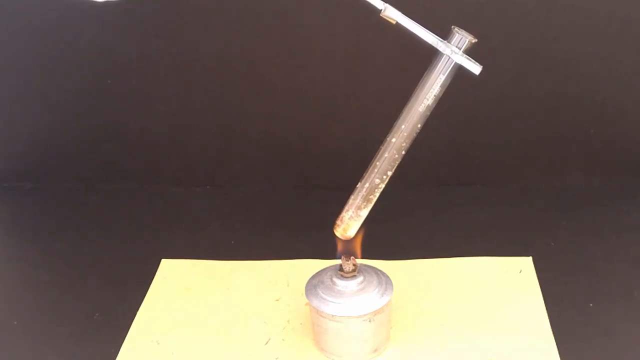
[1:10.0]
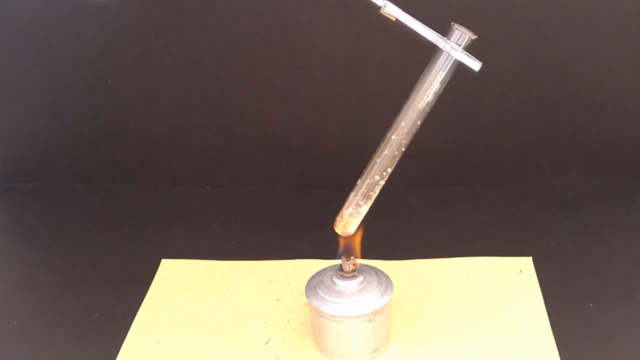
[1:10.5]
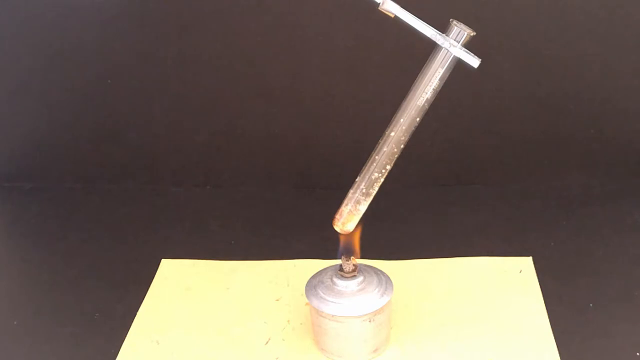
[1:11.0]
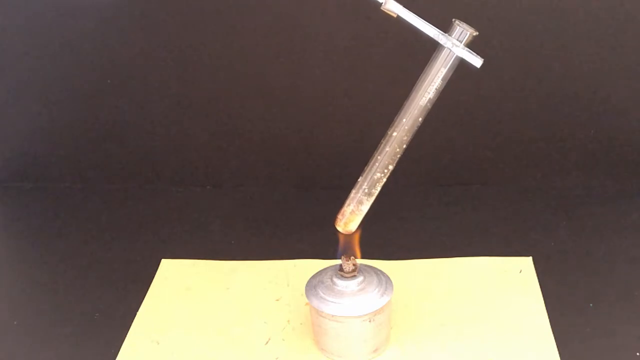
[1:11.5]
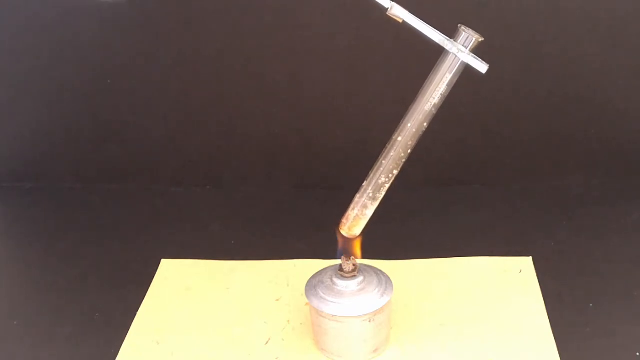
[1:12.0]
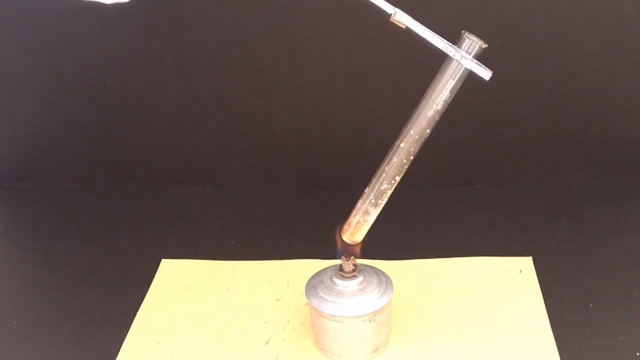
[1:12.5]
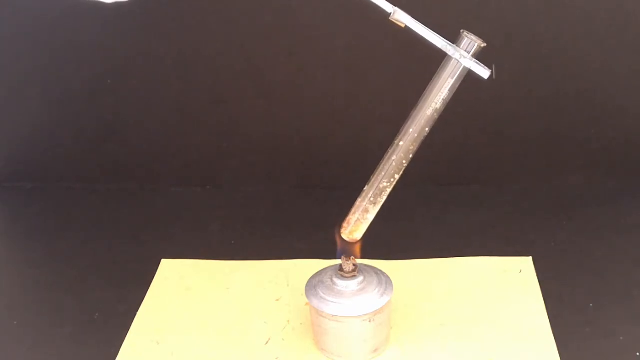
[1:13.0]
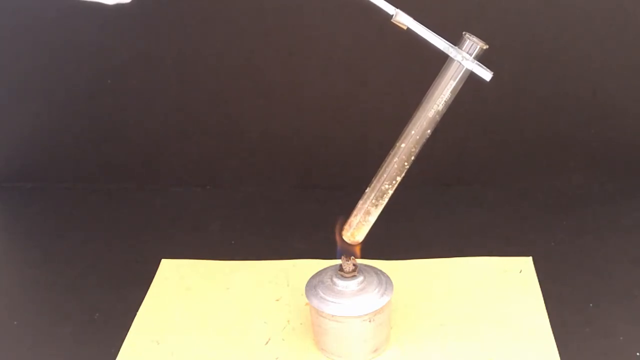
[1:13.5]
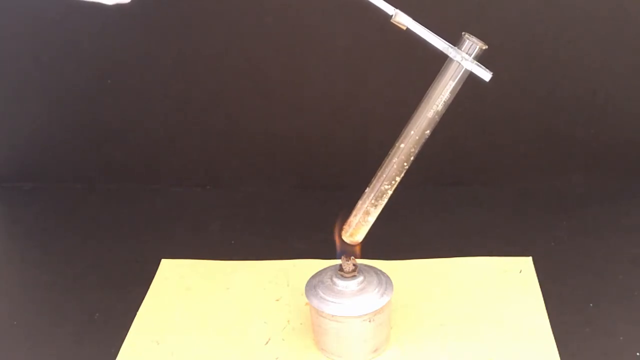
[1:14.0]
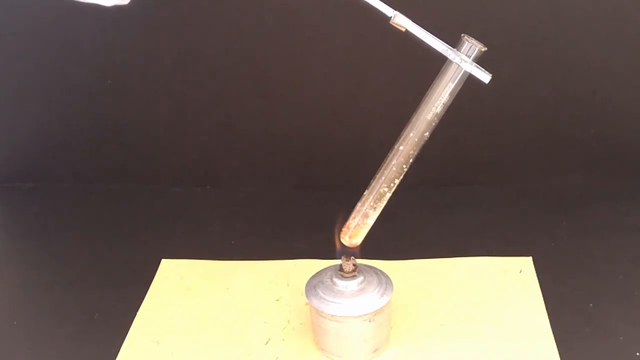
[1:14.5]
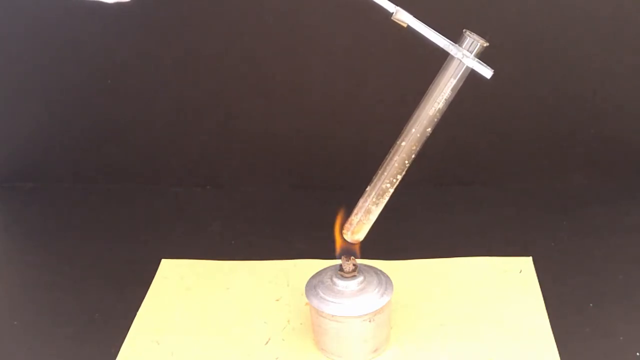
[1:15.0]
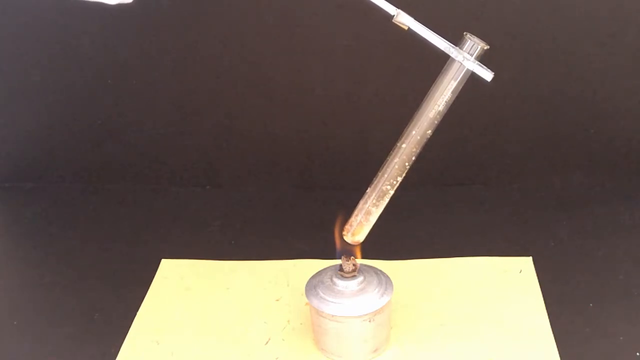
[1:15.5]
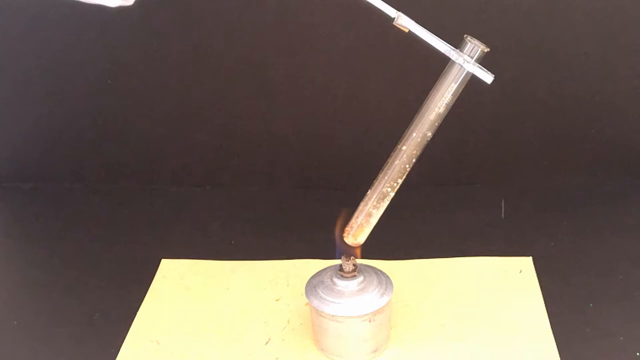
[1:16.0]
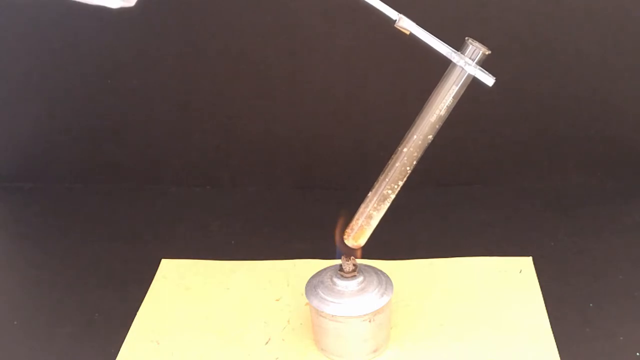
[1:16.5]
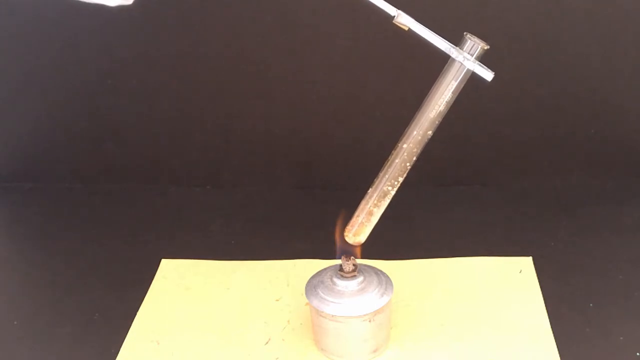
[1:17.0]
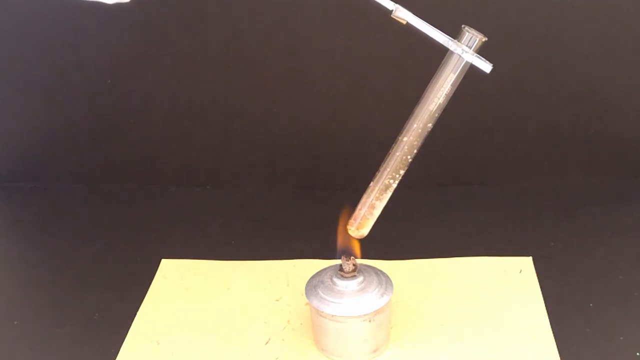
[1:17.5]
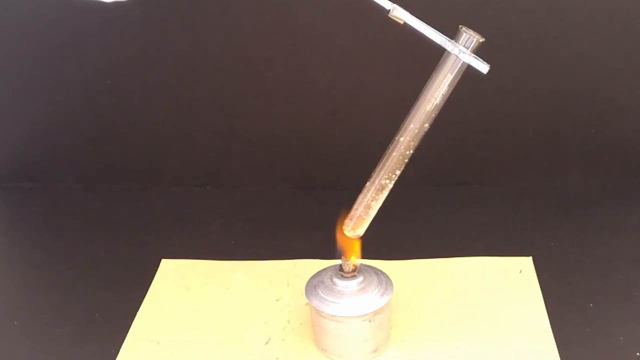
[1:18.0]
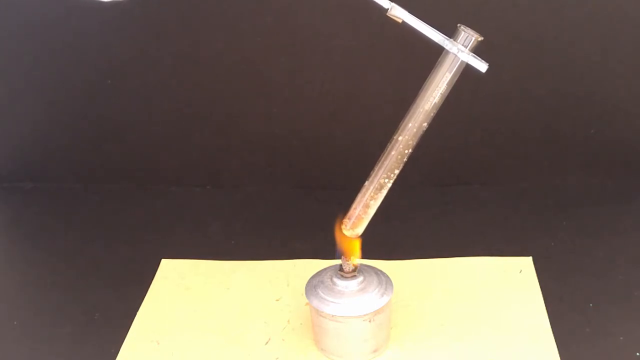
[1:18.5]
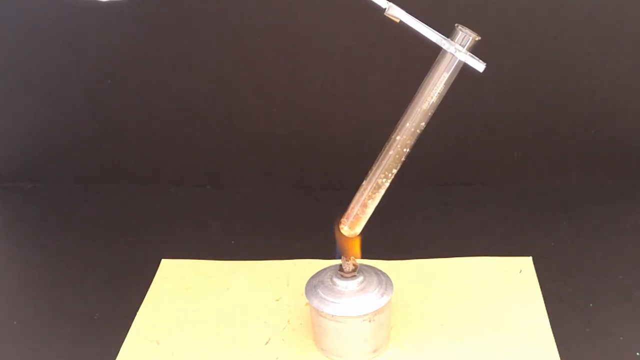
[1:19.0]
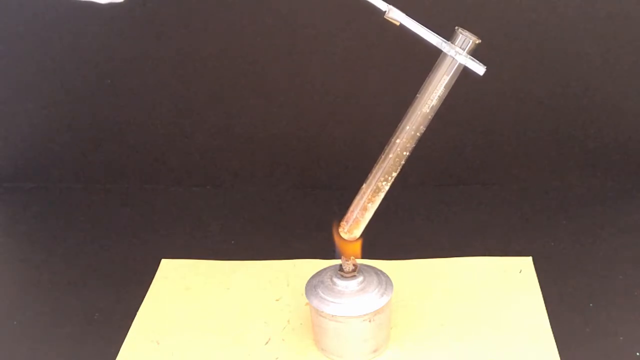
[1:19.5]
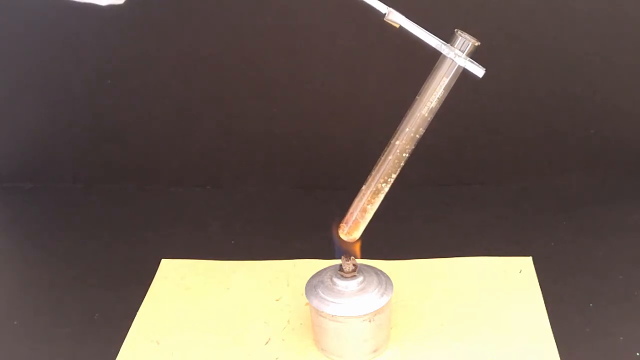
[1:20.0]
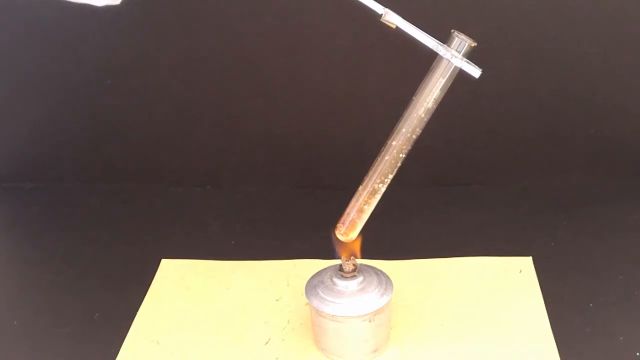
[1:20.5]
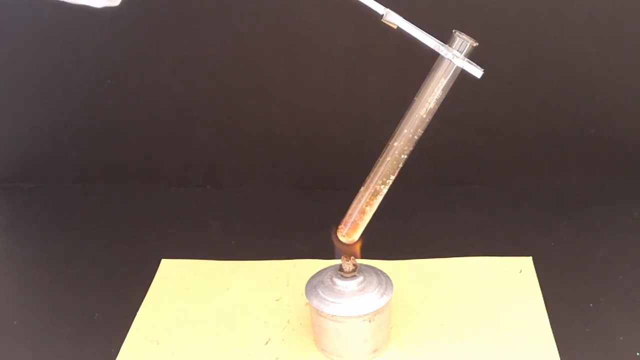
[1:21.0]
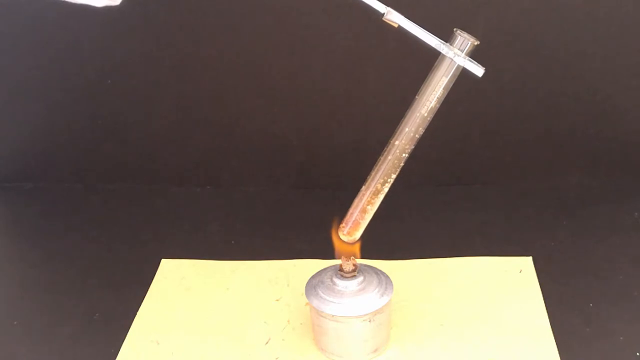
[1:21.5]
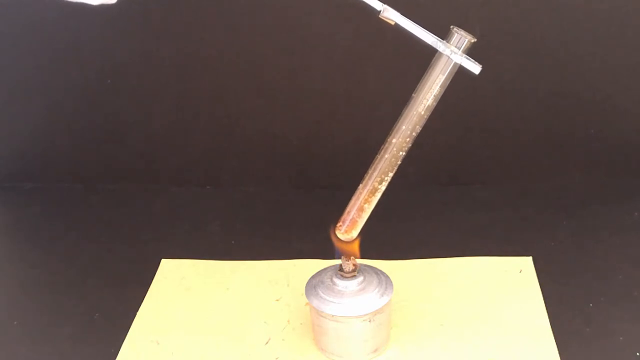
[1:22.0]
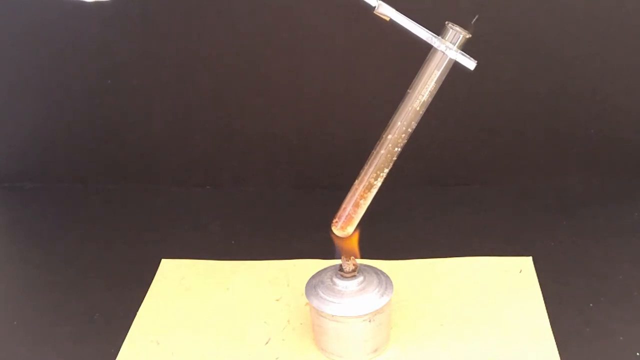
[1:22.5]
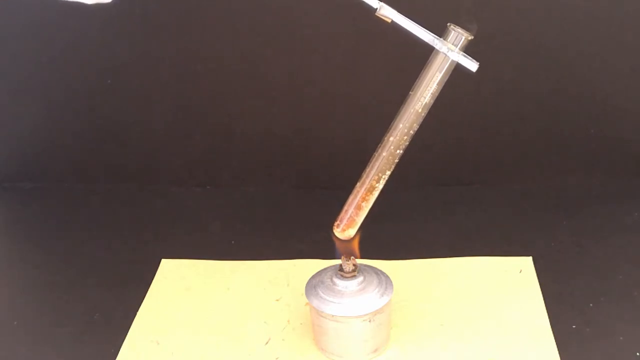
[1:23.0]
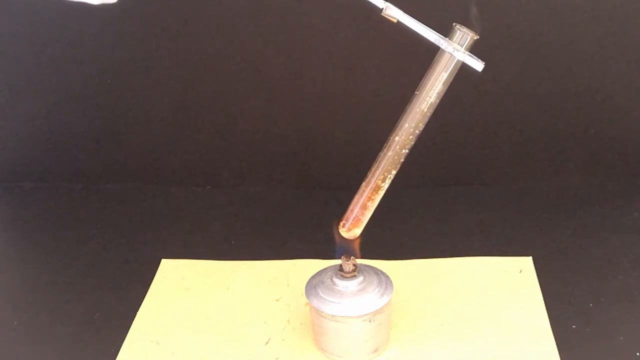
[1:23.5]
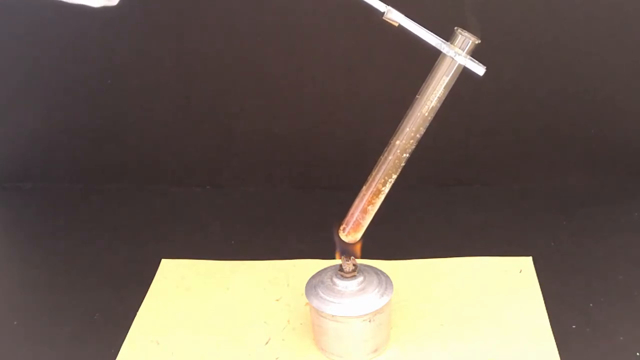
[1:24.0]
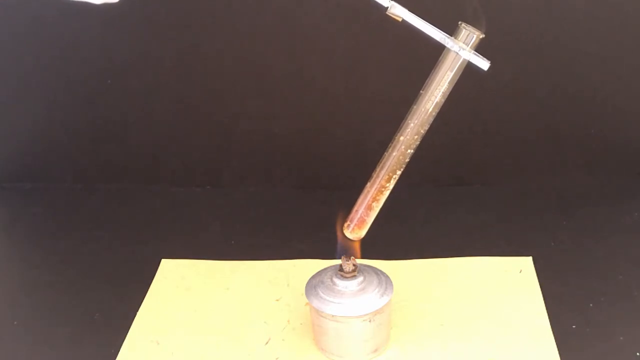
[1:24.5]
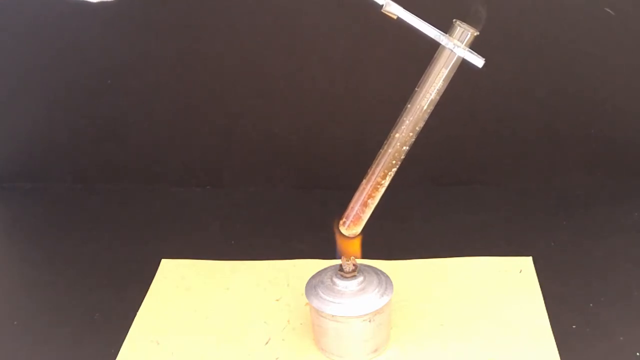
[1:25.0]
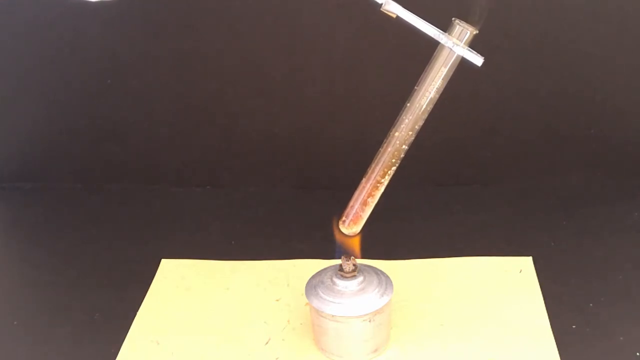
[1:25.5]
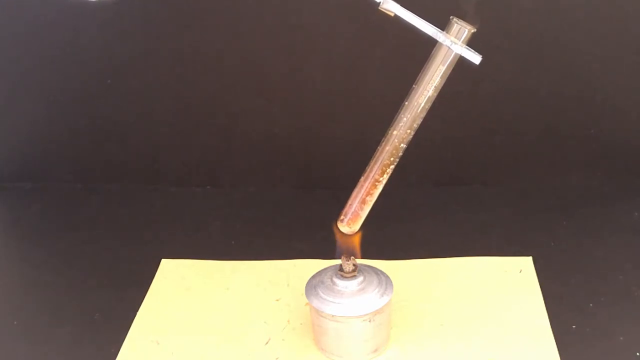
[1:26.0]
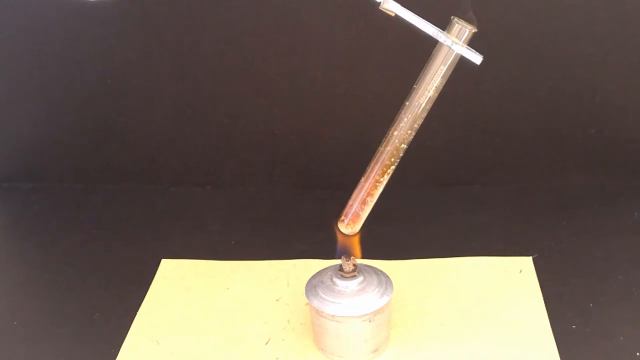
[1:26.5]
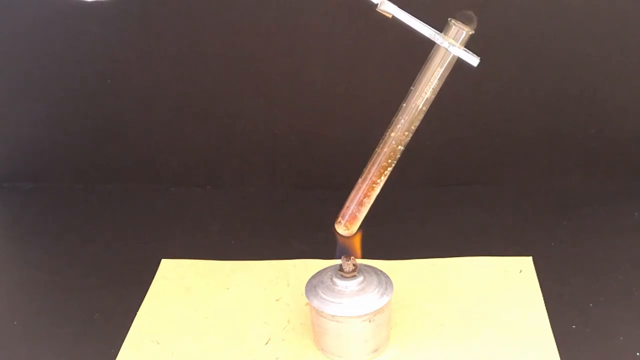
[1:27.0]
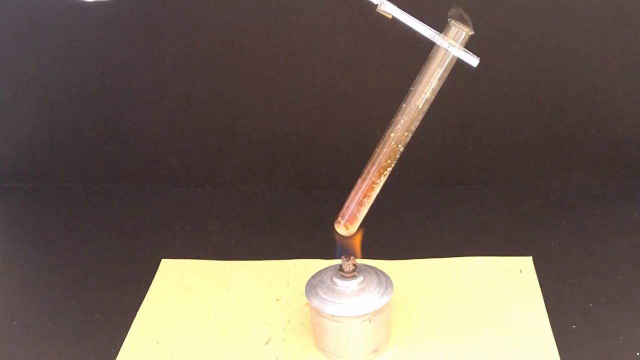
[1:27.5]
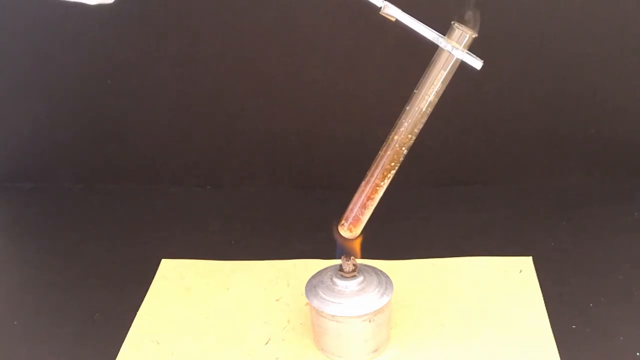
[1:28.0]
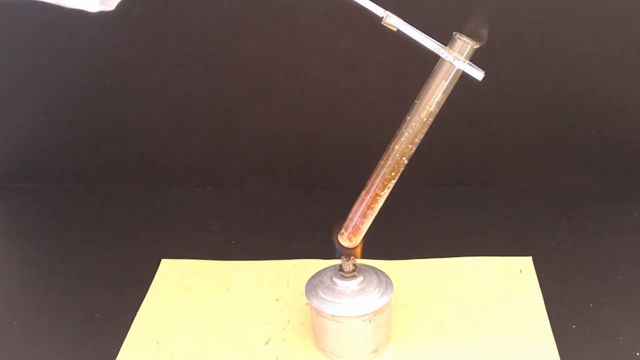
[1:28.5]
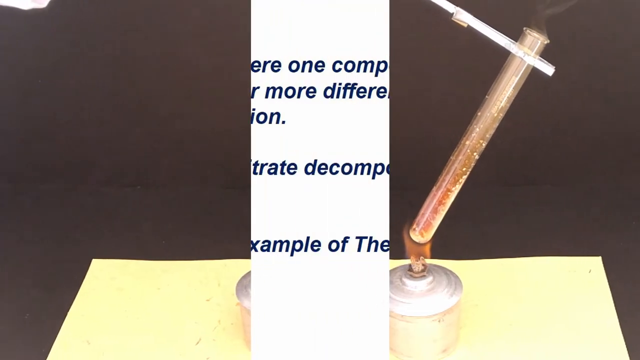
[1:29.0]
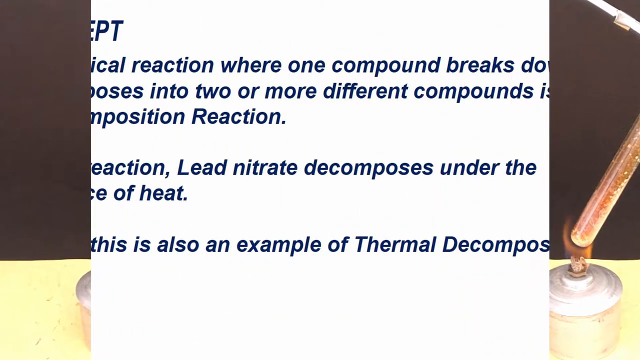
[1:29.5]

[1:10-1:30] A dark gray or black table is barely visible, with a yellow rectangular piece of paper or some kind of pad on it, maybe to protect the table from heat. On top of it sits a silver lamp, lantern or torch of some kind, with a wick coming out of the top and an orange flame burning at the top of the wick. The lantern appears to be the type powered by alcohol, oil or some other liquid fuel. Somebody holds a vial or test tube with a white substance inside over the flame, and the substance turns yellow as it heats. A white tong-looking object holds the vial over the flame. At some moments, a sleeve that appears to be white is visible in the top left corner of the screen, probably belonging to the person holding the vial.